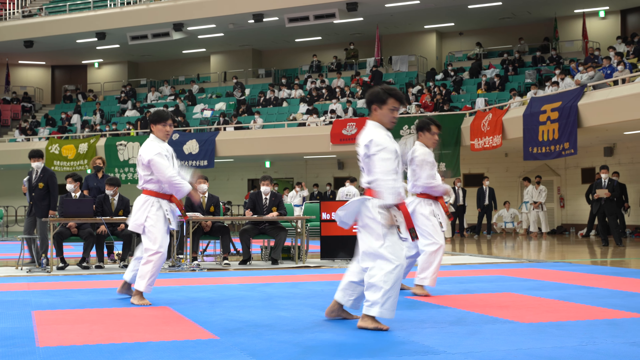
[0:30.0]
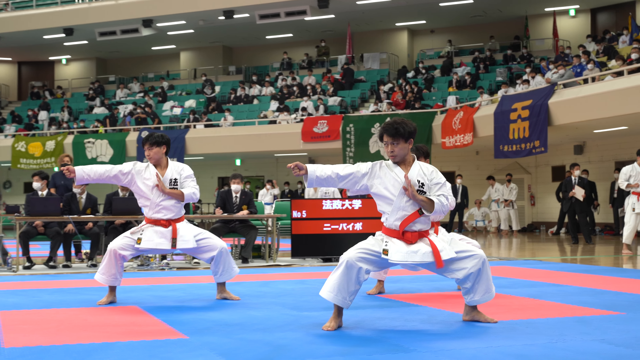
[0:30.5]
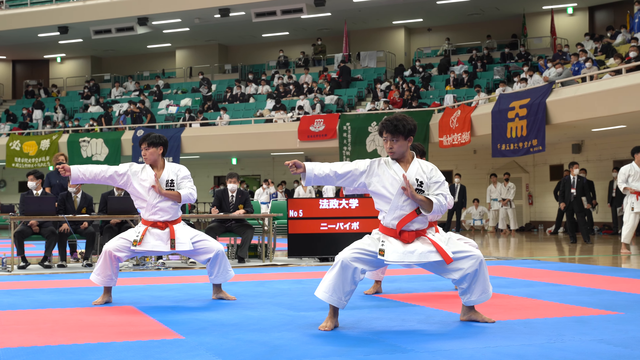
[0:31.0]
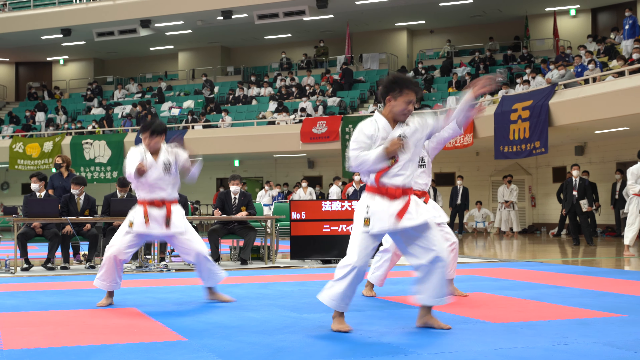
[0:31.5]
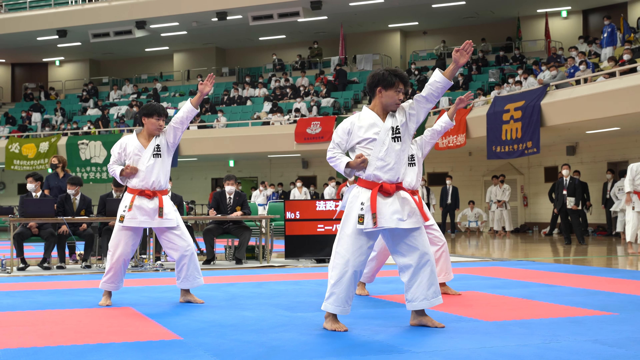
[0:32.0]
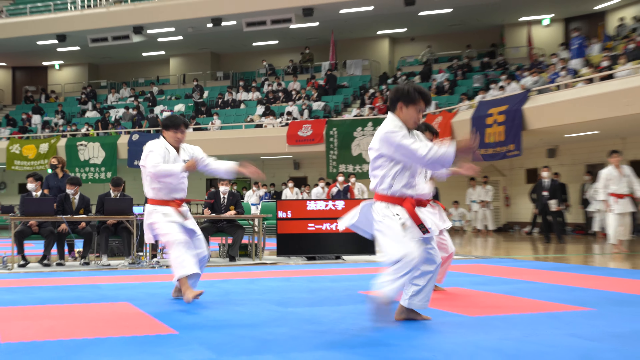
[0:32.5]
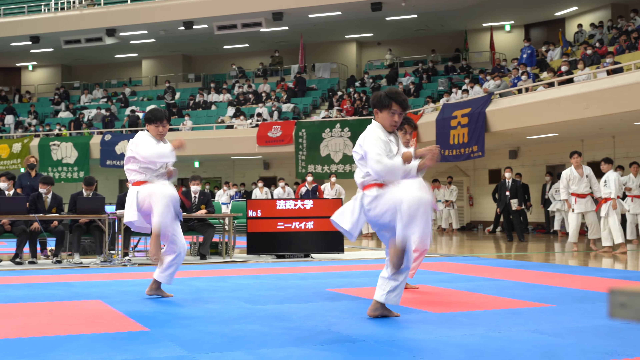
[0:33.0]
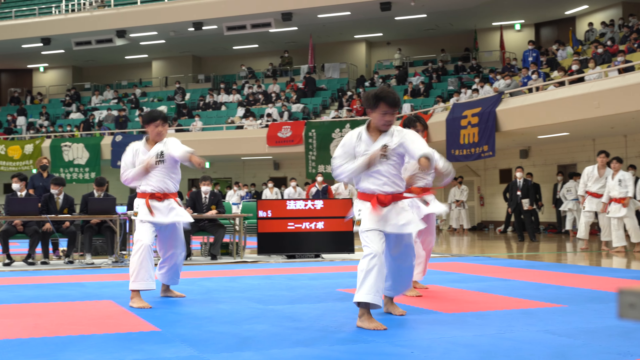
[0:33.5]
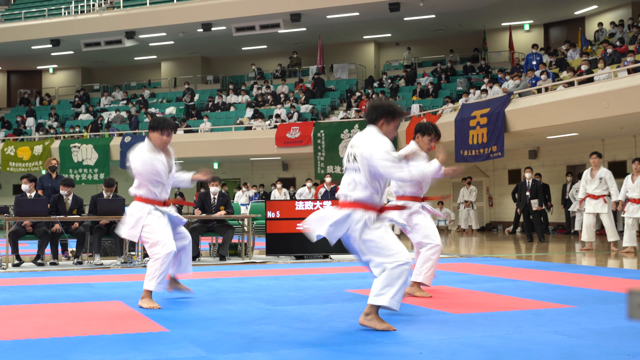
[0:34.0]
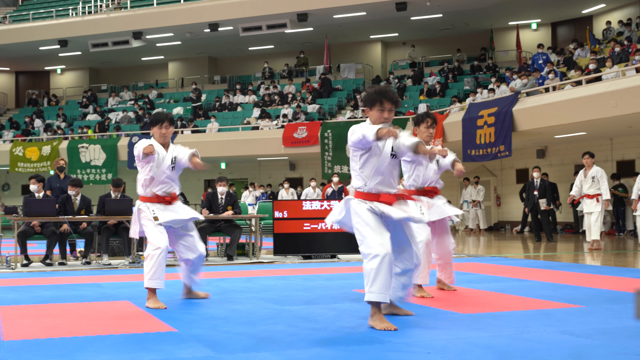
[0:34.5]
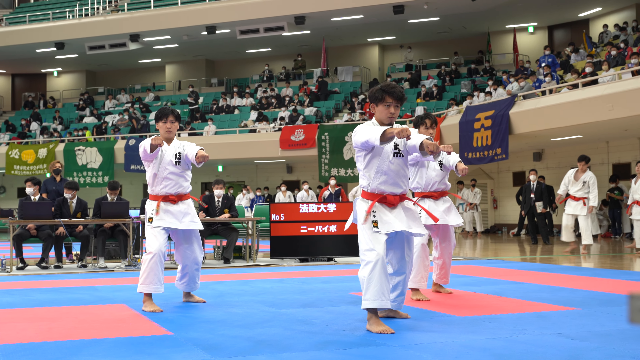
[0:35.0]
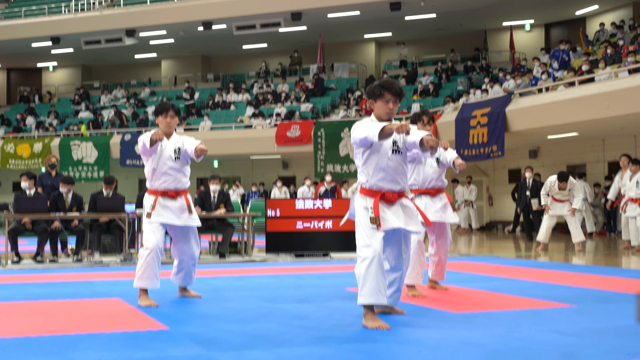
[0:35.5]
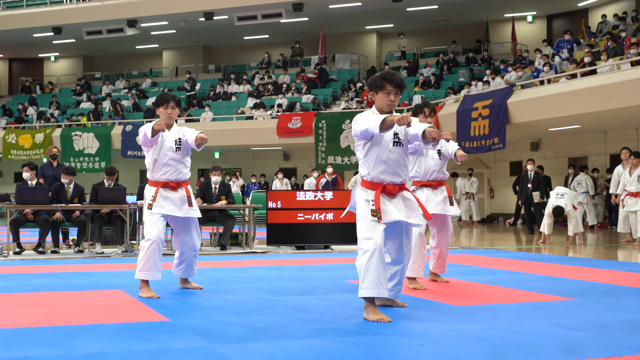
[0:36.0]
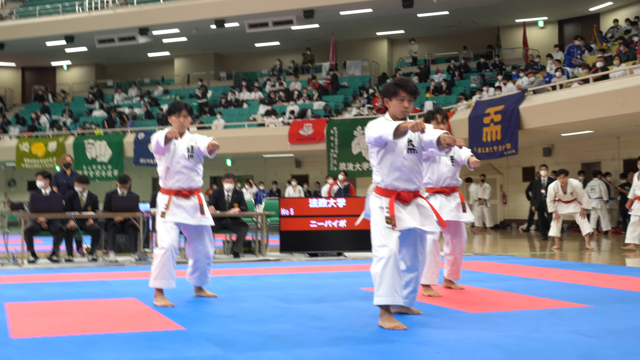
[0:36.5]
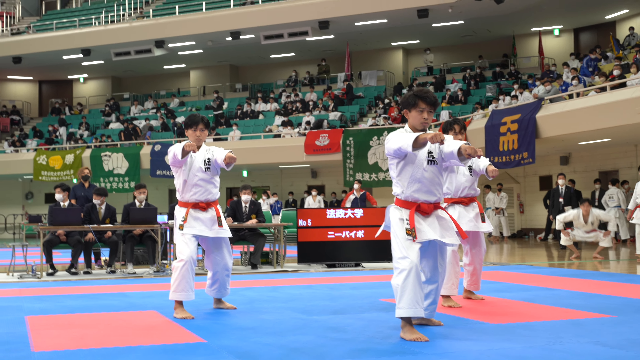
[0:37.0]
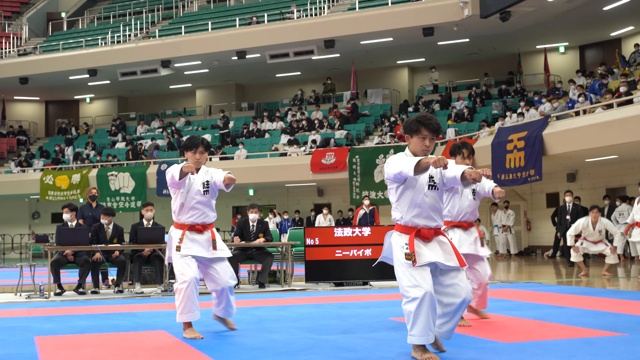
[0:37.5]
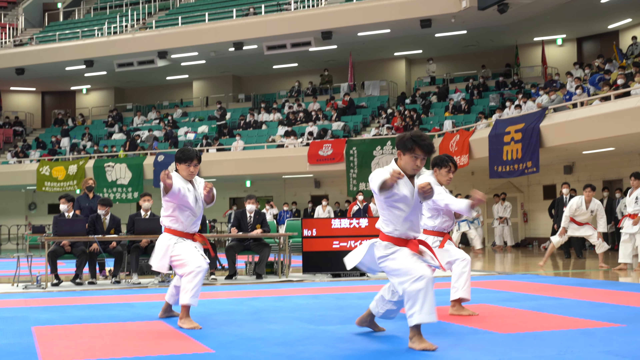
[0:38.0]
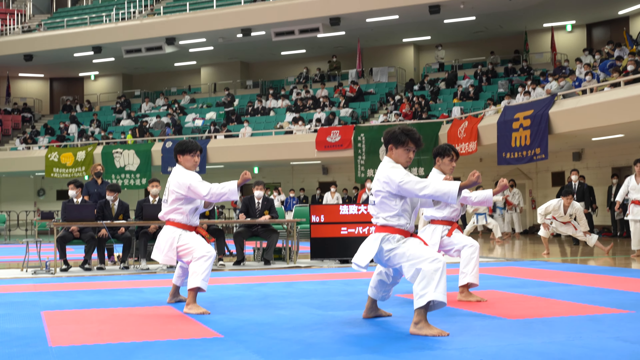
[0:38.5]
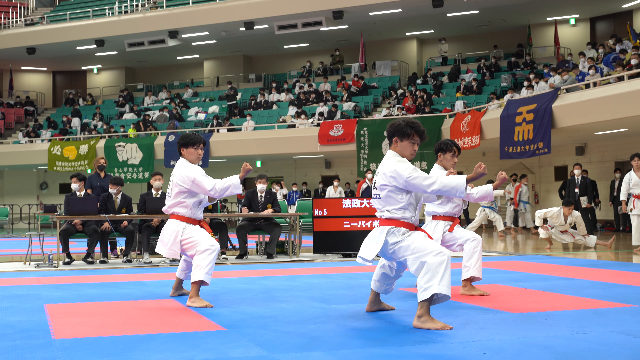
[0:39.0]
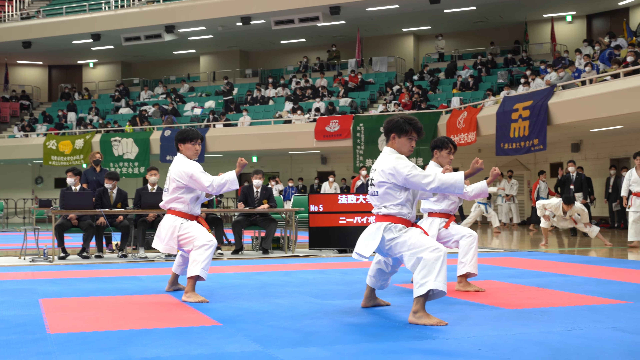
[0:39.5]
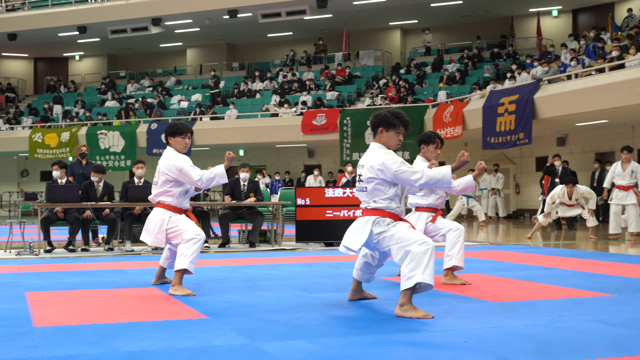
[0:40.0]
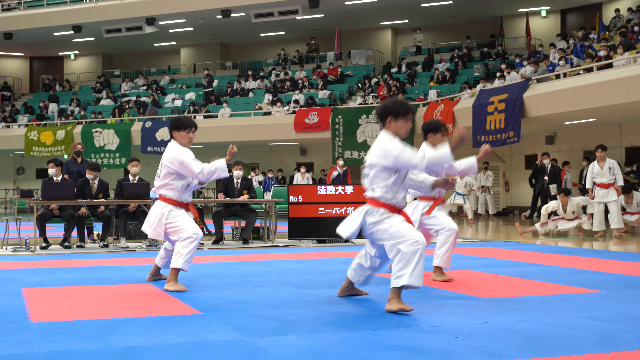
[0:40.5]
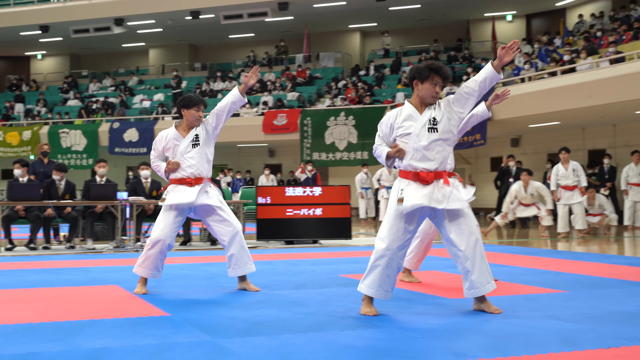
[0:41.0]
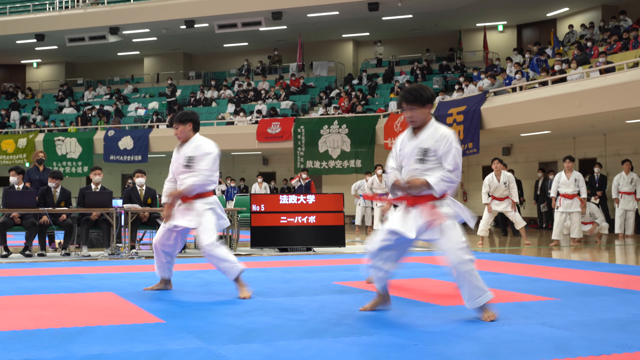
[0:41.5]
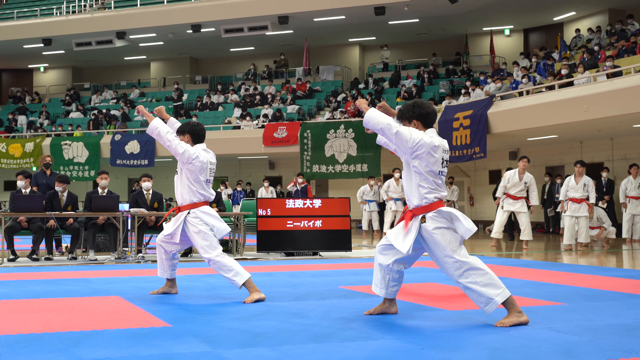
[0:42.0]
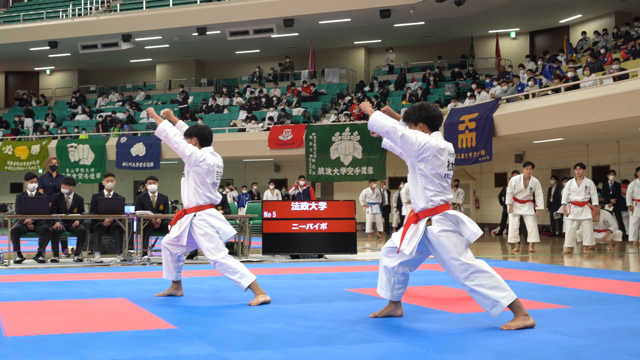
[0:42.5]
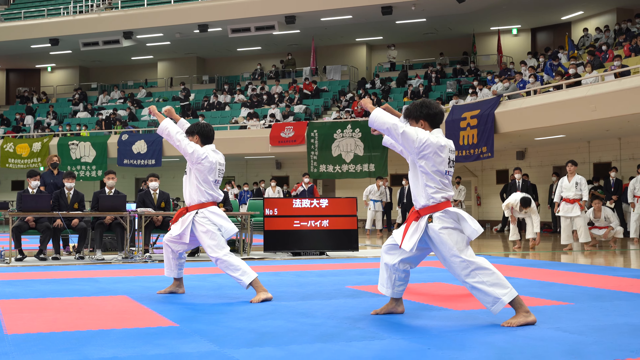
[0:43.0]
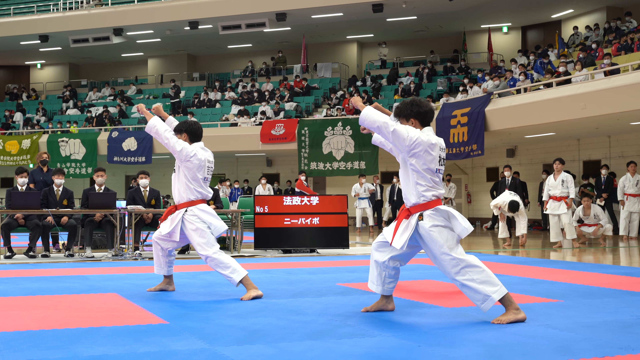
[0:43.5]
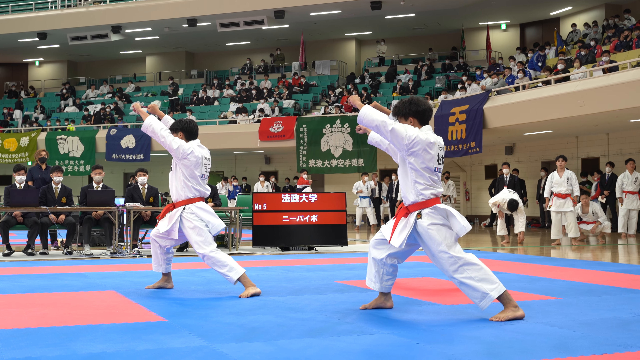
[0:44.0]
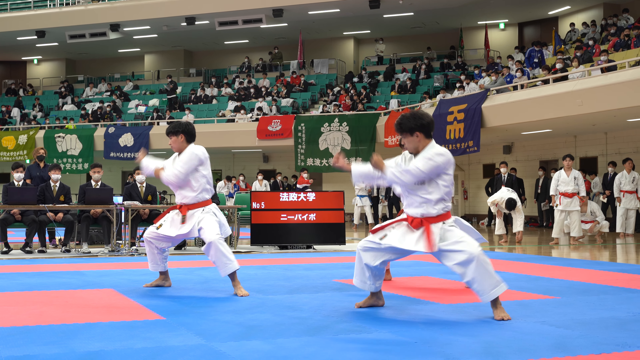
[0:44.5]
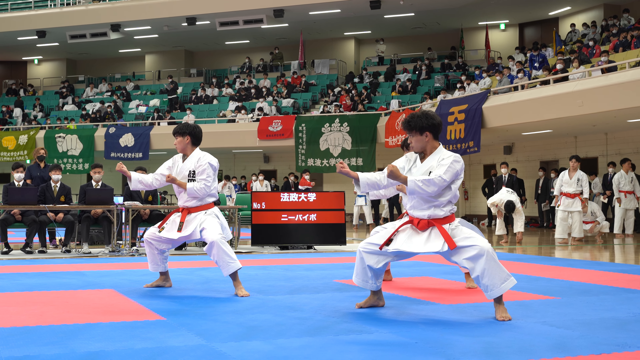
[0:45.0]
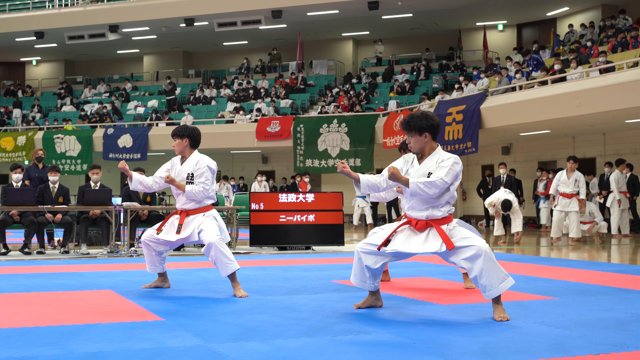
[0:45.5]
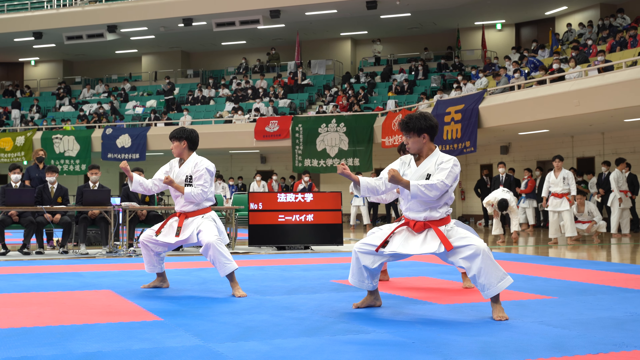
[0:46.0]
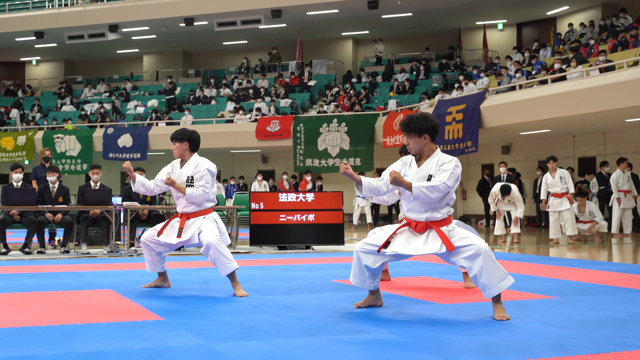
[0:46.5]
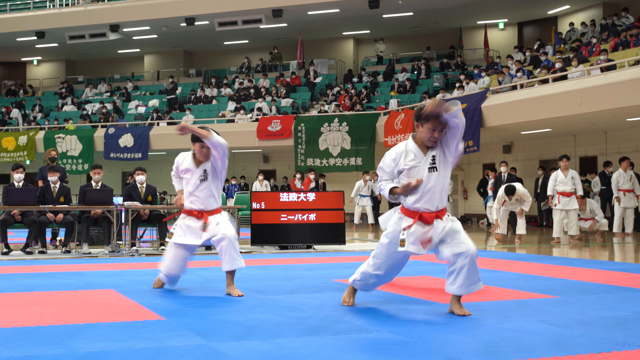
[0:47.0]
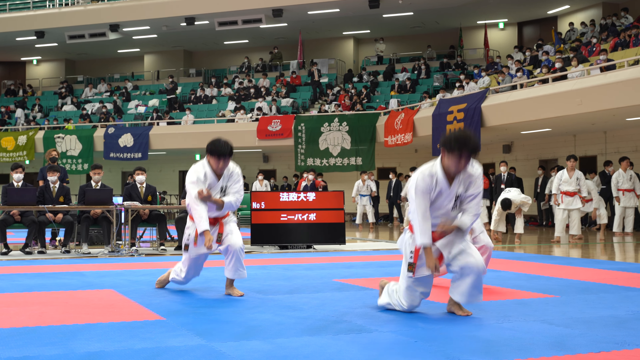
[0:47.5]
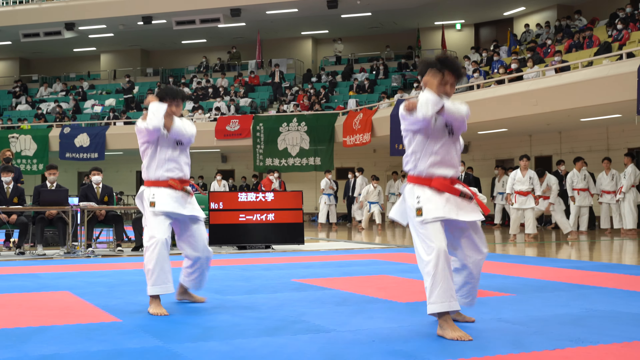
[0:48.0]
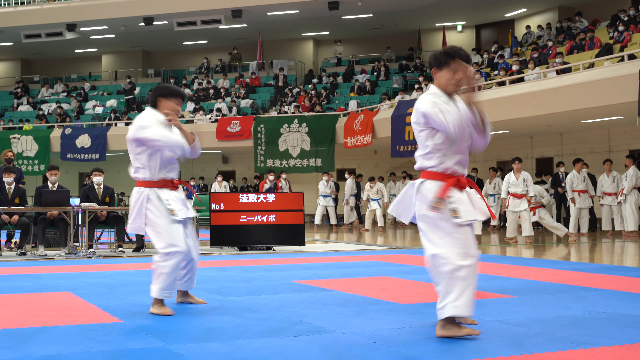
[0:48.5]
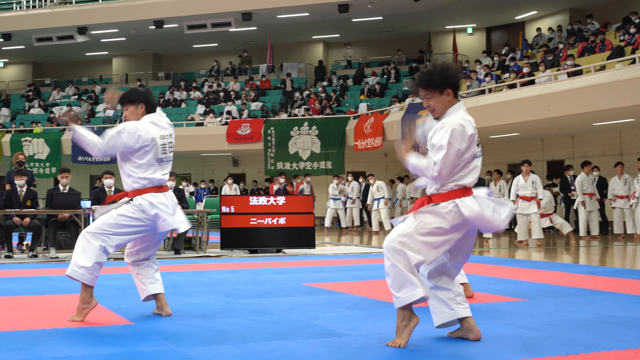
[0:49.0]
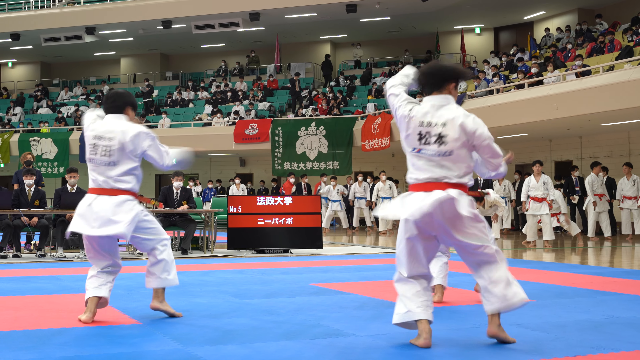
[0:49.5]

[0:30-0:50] In a very quick movement, the men shoot their left hands up in a straight line, pull them down, and straighten their right hands out to the side while turning their heads toward the movement. They come down into a wide-legged stance with feet pointed outward. Then they shoot up and push their right hands into a bent position at their sides with fists clenched while their left hands go up diagonally with palms open, their heads following the movement. A series of kicks and punches follows, all three doing the same movements in sync. Behind them, off to the side, several other men in the same karate uniforms are stretching and warming up, getting ready for their turn. The judge panel continues to watch, and there is some commotion with movement in the background.